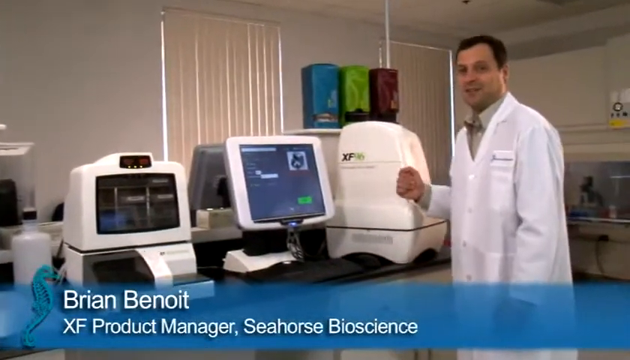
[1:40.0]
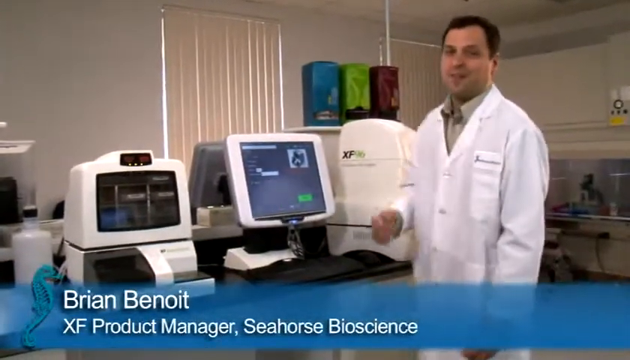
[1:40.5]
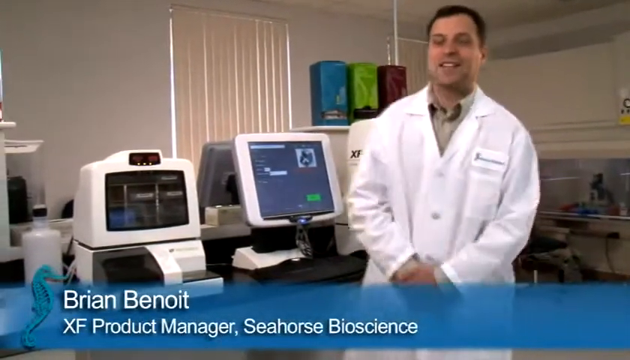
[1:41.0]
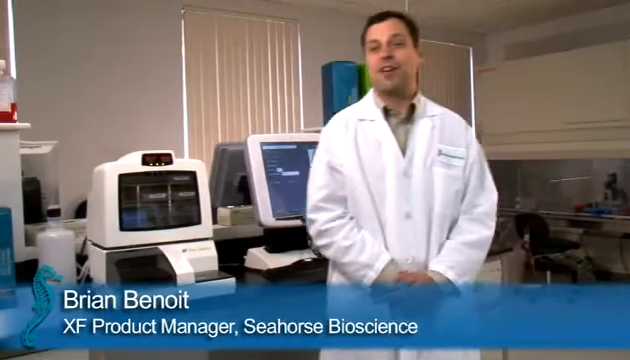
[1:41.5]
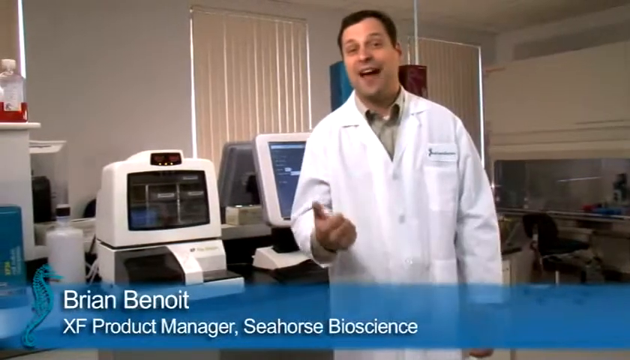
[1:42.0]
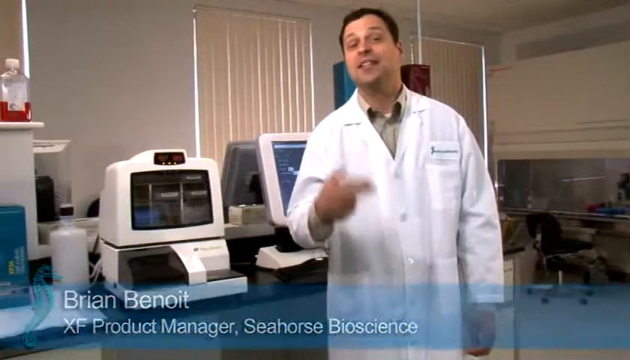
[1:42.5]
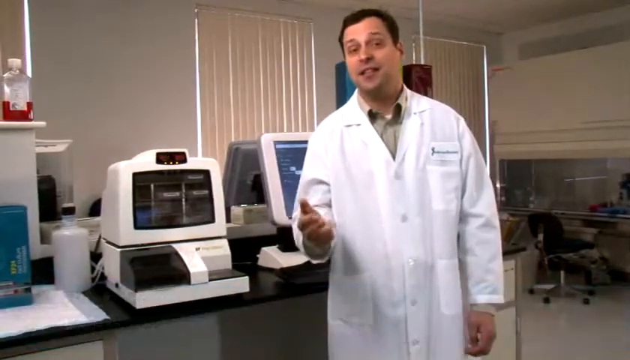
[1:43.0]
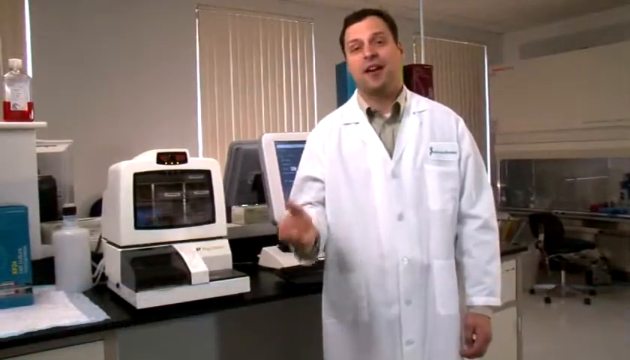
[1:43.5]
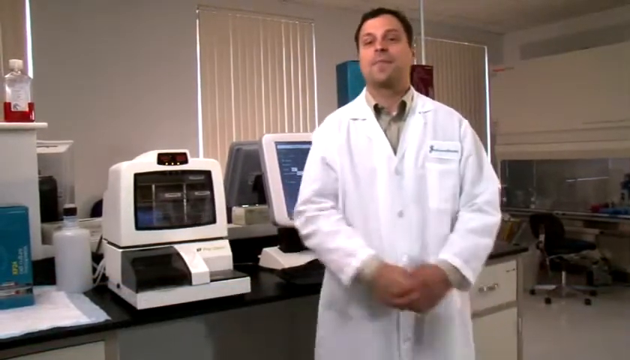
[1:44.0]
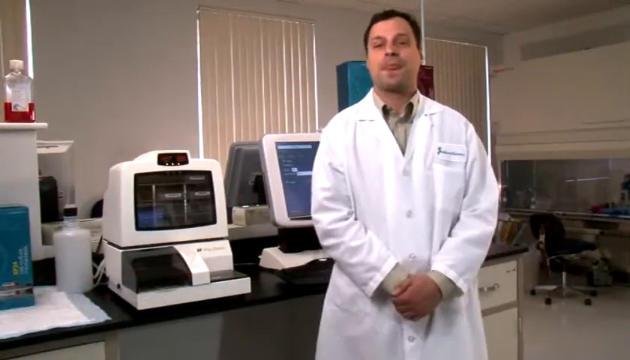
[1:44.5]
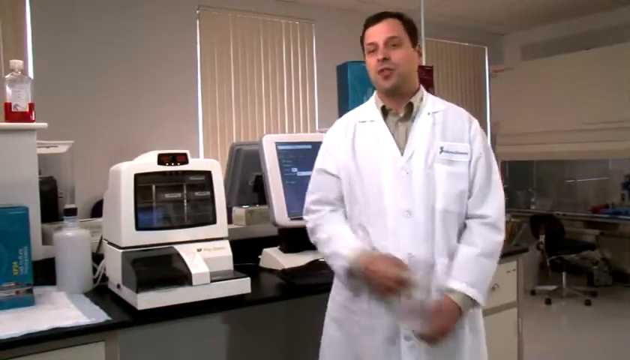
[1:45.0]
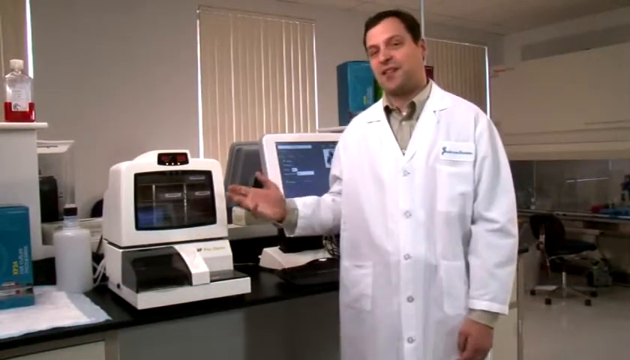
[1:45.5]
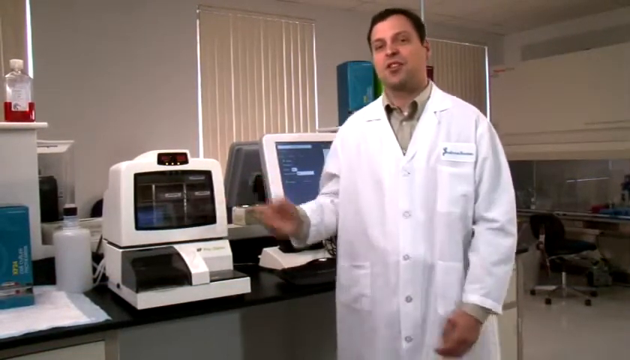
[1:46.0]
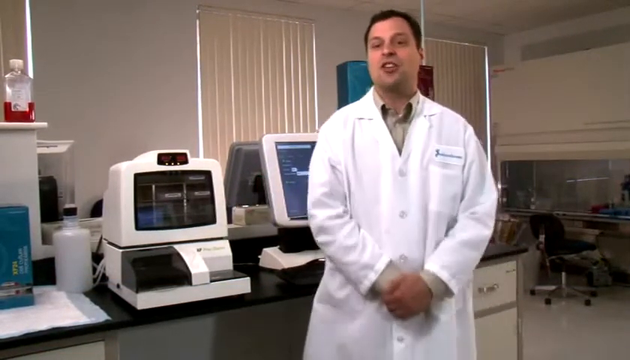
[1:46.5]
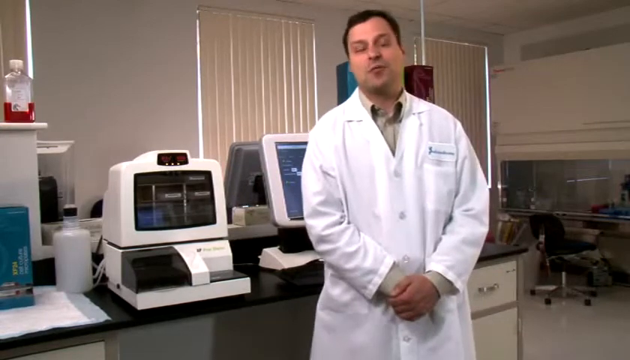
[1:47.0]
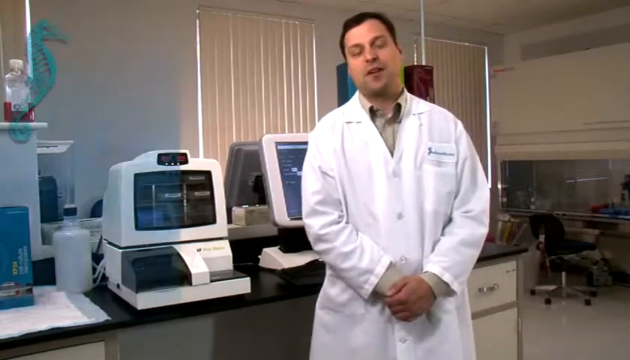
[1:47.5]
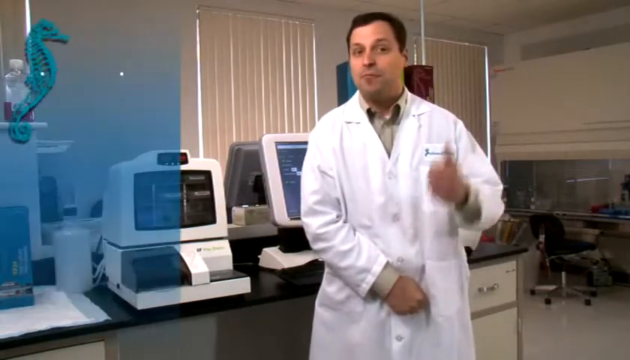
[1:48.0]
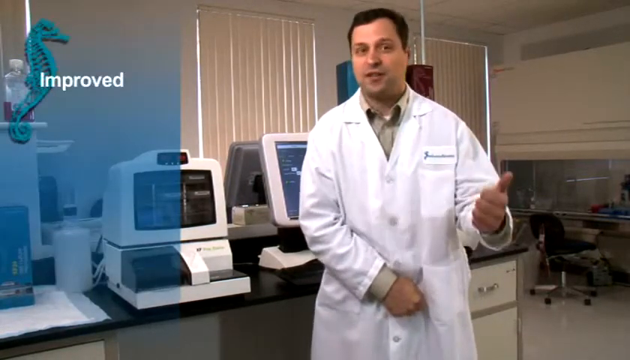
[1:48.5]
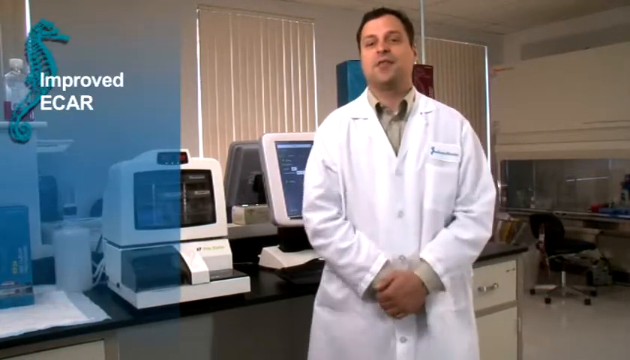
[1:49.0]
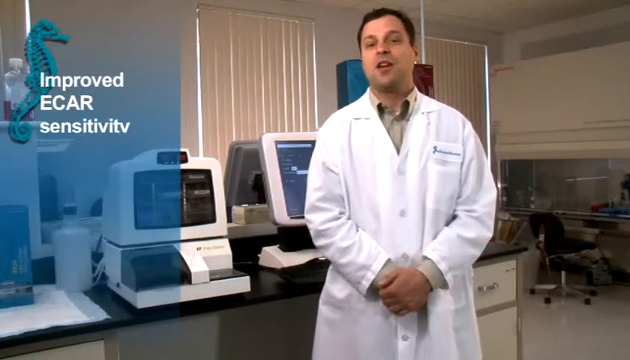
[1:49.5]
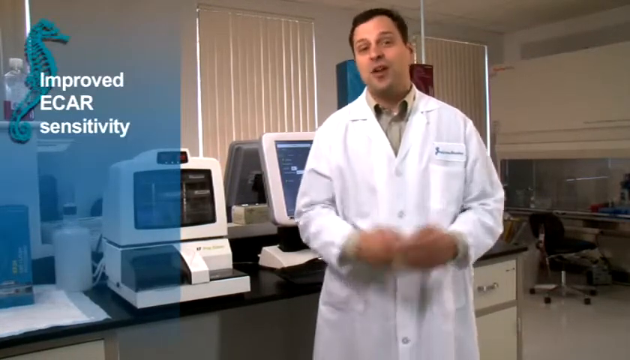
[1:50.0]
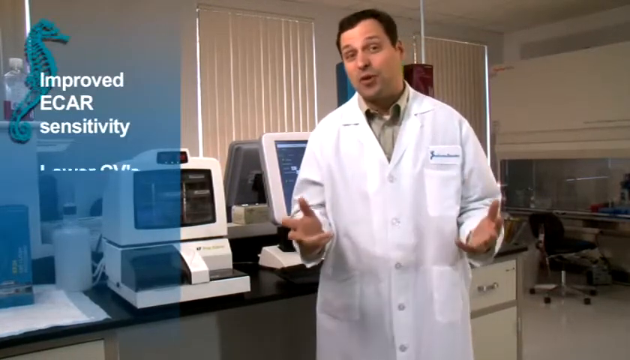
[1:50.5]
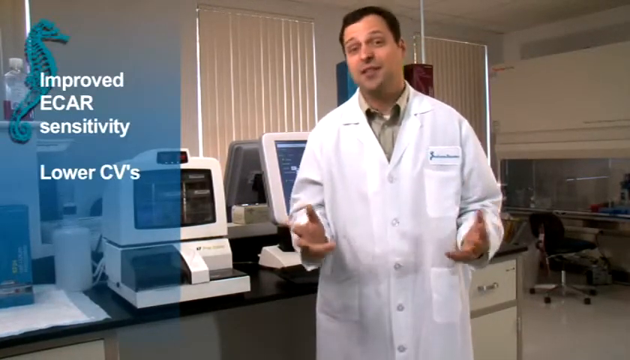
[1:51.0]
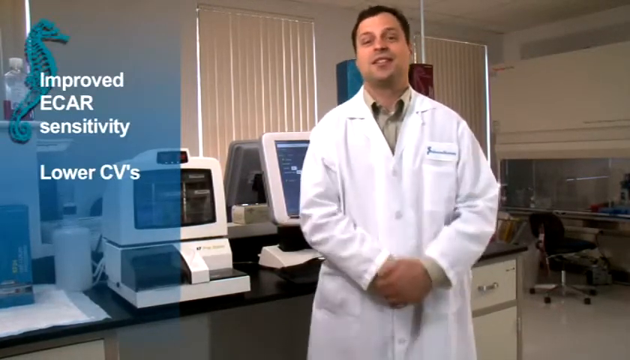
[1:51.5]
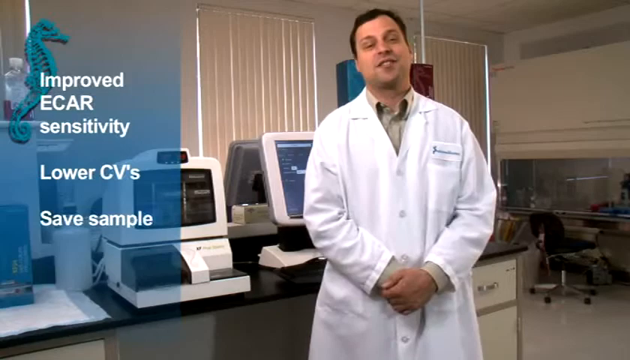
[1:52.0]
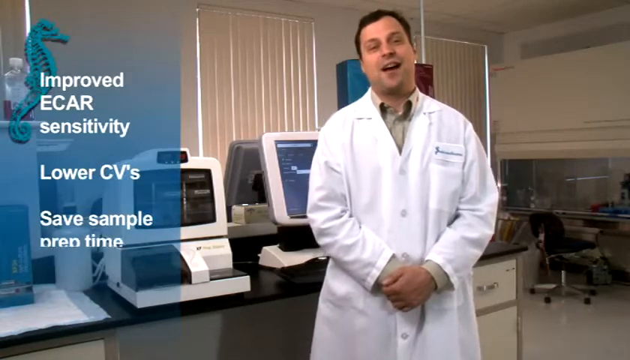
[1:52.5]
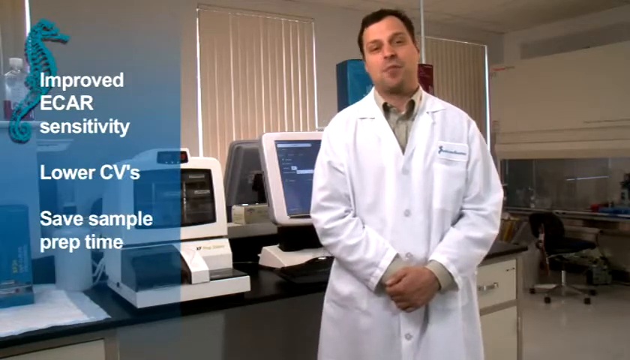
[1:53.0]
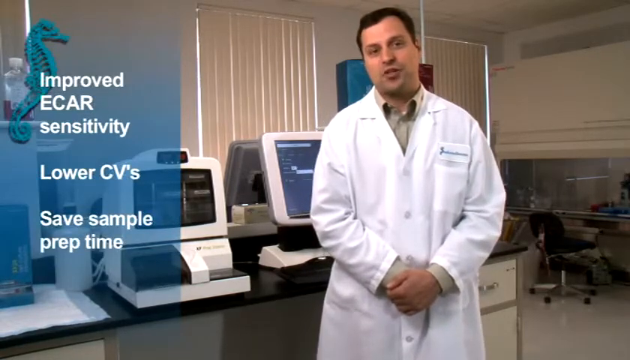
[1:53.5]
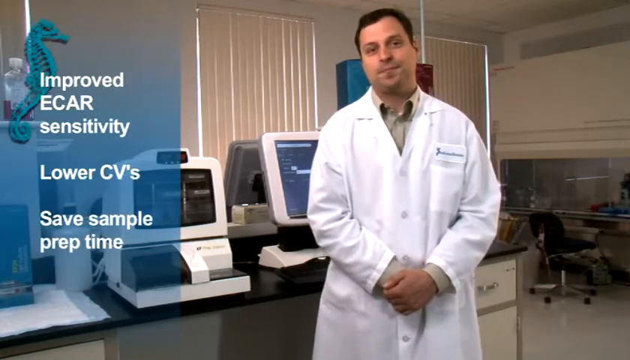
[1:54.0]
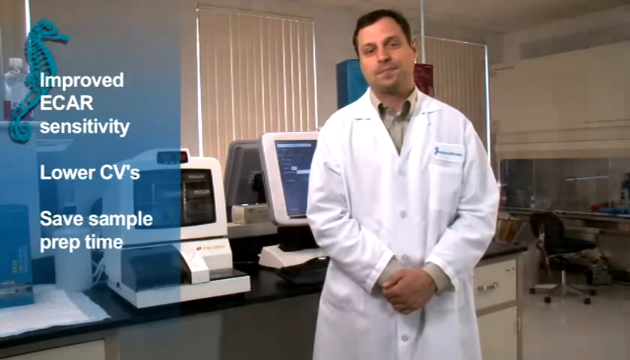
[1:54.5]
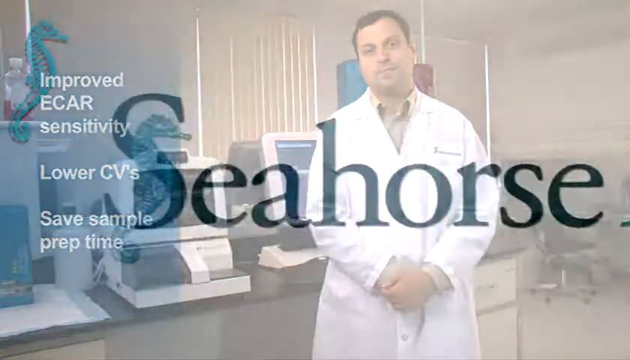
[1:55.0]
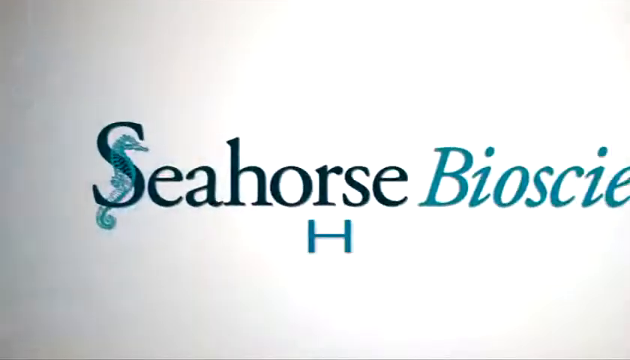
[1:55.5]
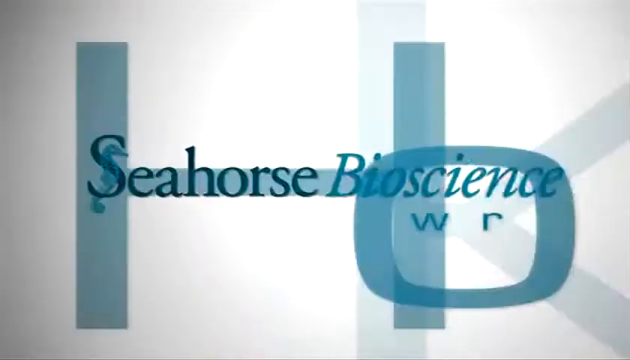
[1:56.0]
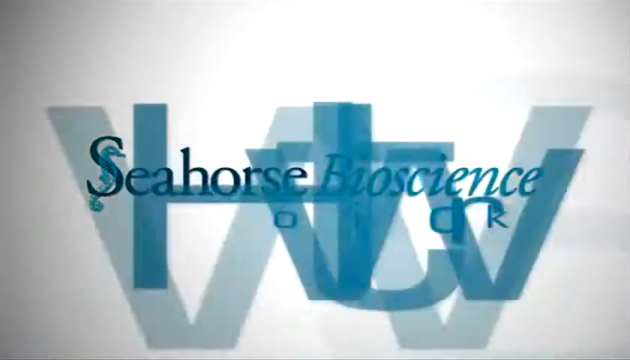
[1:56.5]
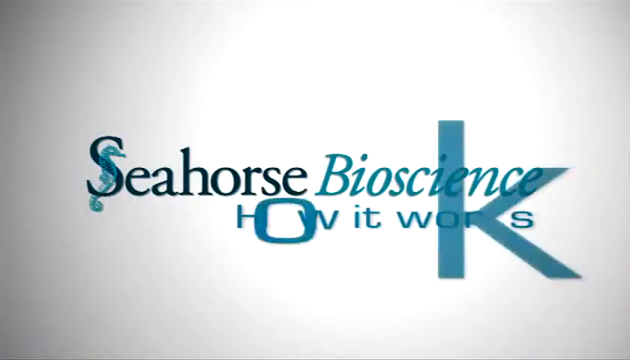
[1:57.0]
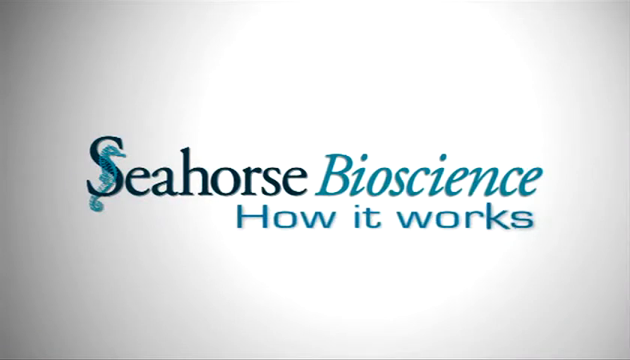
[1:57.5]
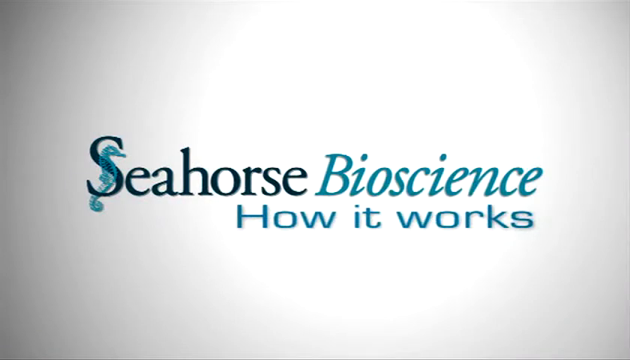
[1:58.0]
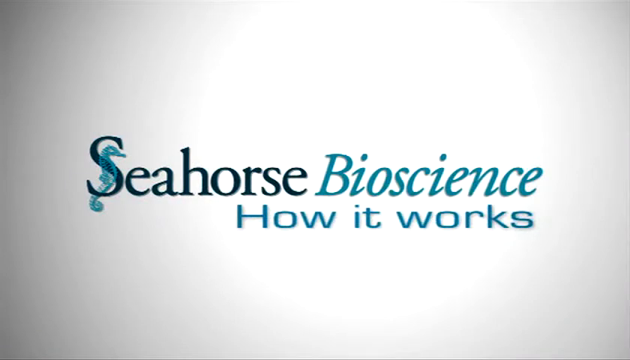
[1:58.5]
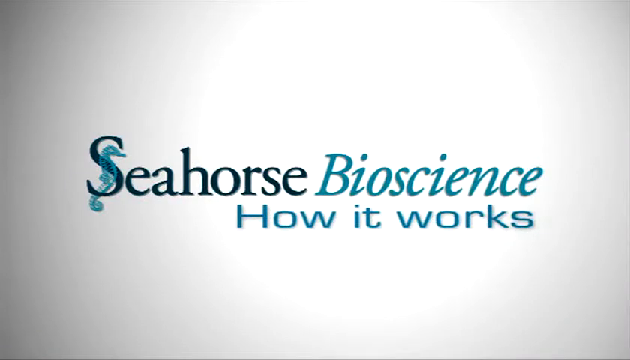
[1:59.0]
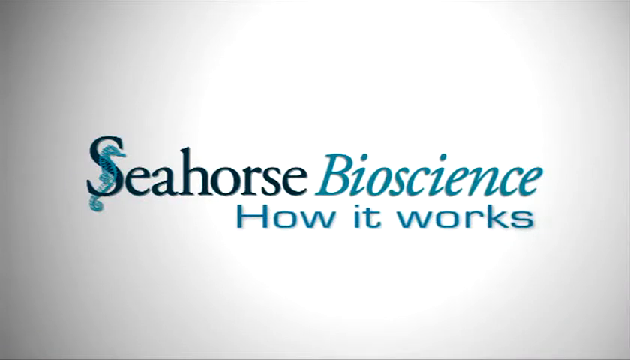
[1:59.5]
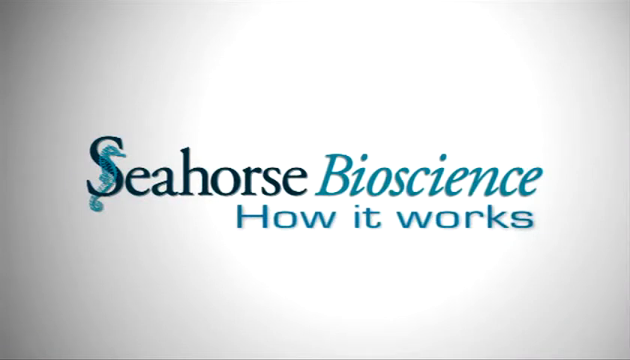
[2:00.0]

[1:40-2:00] A man stands beside two machines. To the right of the two machines is the casing of one of the machines, which looks like the case for the first machine on the left. The machine frames and the casing are white. The man wears a white lab coat over his shirt; he smiles as he speaks and then stands with his back towards the machines and his hands clasped in front of him as he speaks. His name, "Brian Benoit", is written in white text across the bottom left of the screen. He continues speaking and gestures with his right hand as if talking about points or facts about the machine. Two closed window blinds are in the background. He clasps his hands together again, unclasps them and gestures with his right hand towards the machines. He claps his hands together again, and as he speaks, white text appears on the left side of the screen: first "improved ECAR sensitivity", then "lower CVs", and then "save sample prep time". The video ends with a screen with the words "Seahorse Bioscience, how it works".